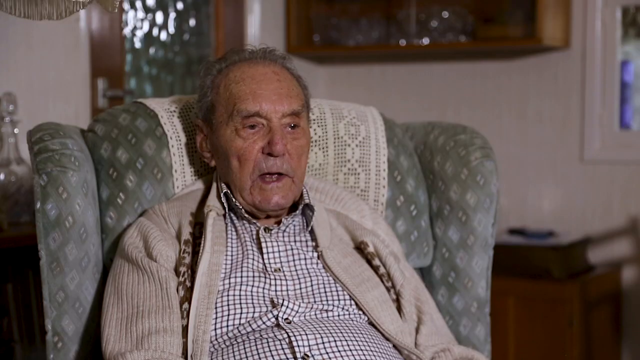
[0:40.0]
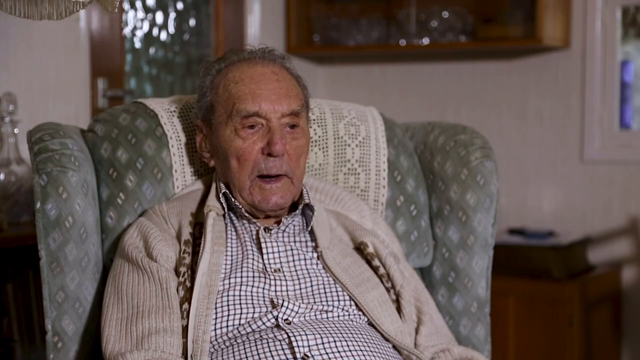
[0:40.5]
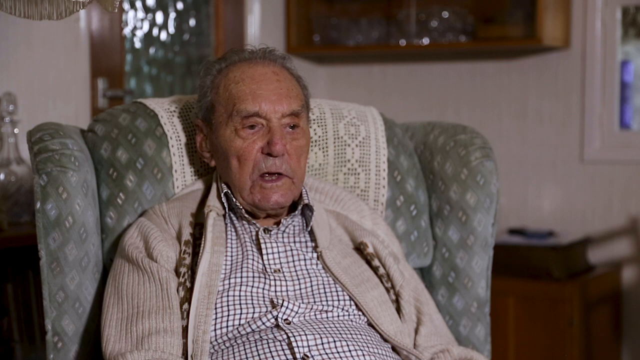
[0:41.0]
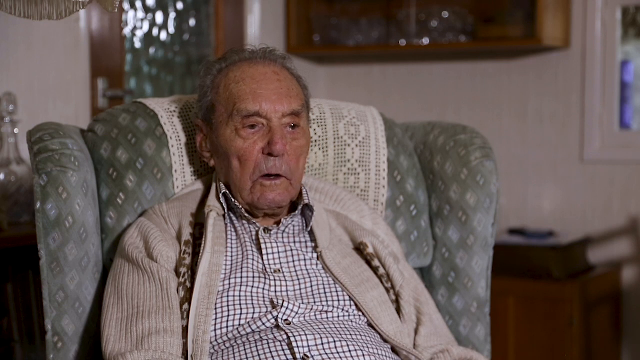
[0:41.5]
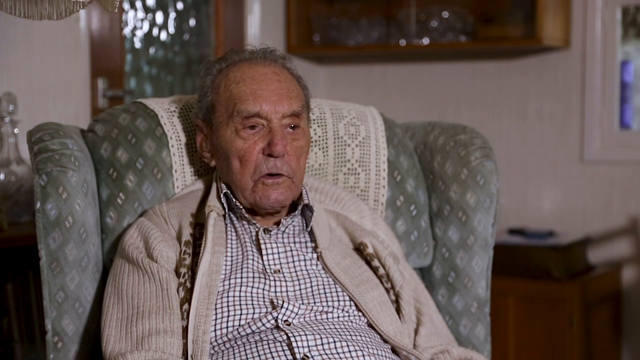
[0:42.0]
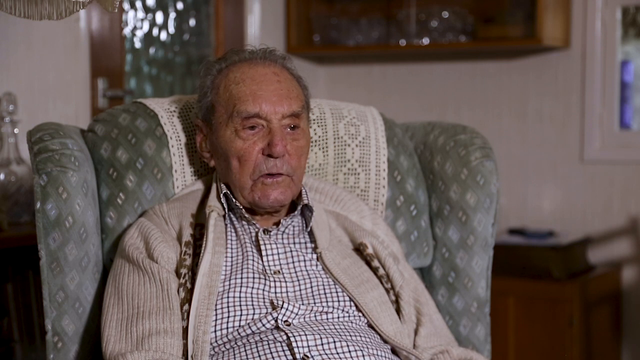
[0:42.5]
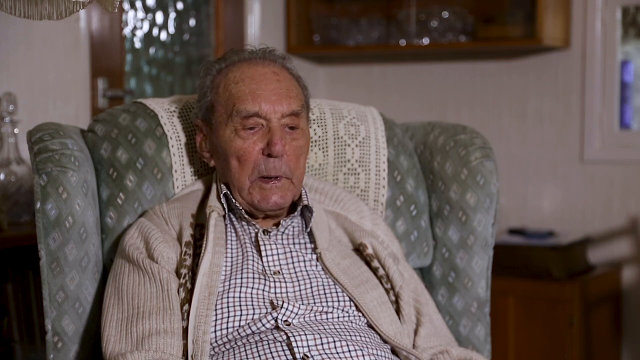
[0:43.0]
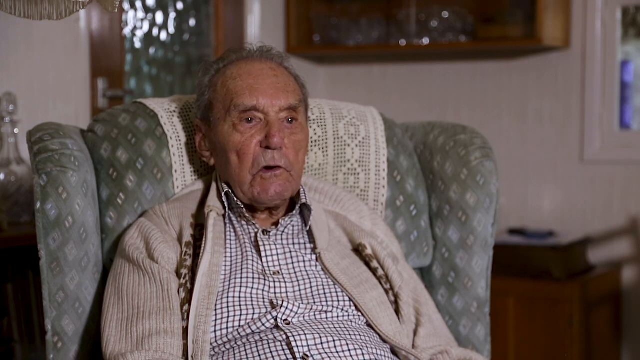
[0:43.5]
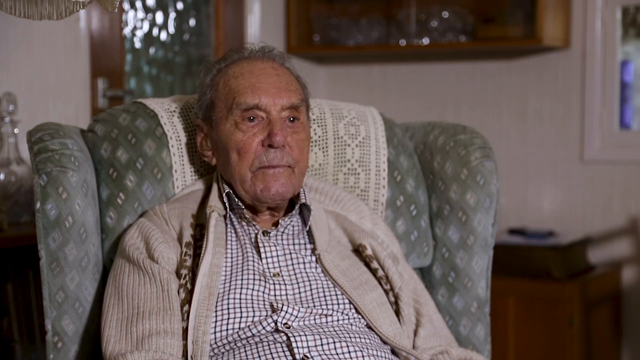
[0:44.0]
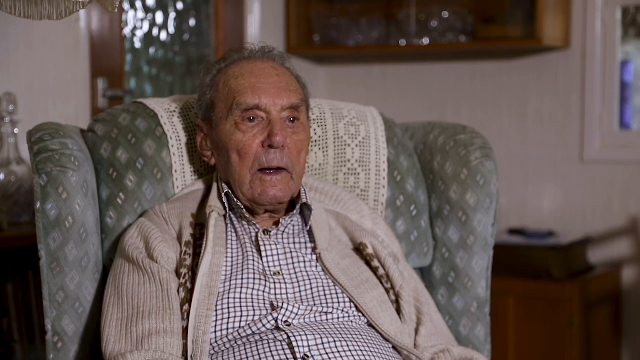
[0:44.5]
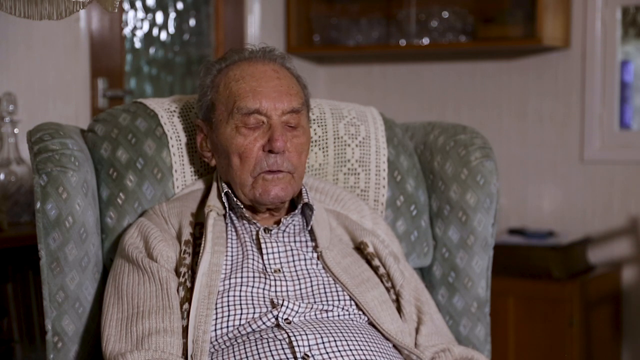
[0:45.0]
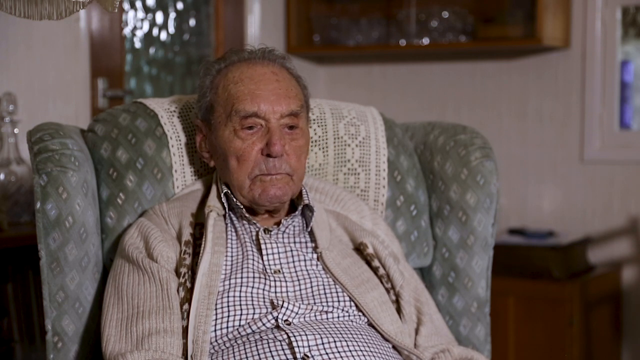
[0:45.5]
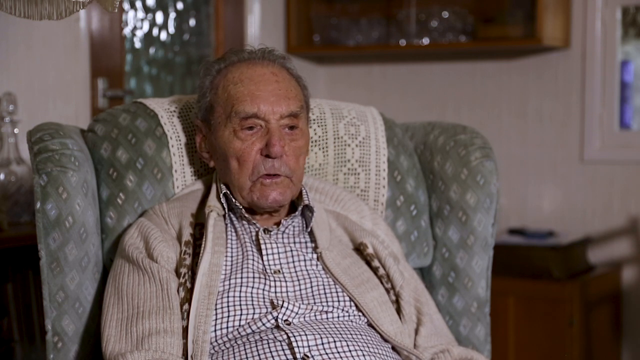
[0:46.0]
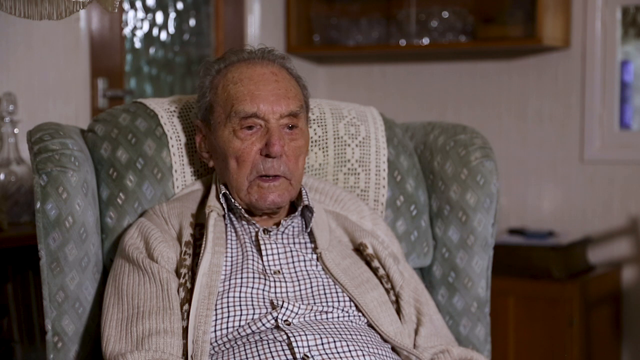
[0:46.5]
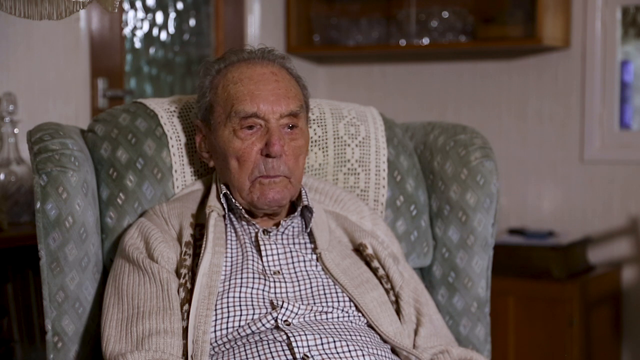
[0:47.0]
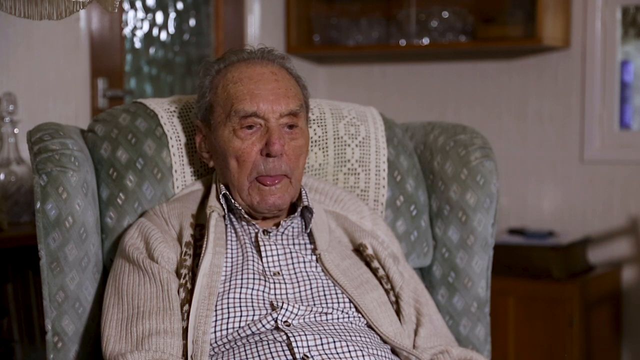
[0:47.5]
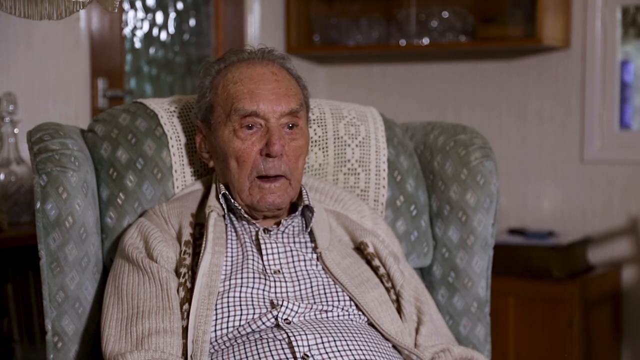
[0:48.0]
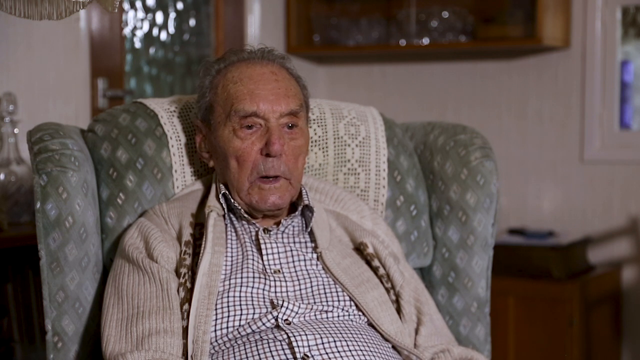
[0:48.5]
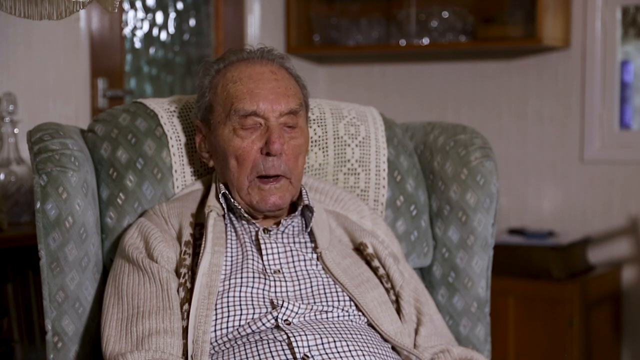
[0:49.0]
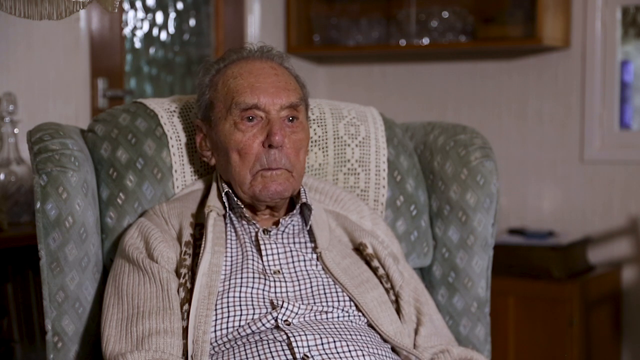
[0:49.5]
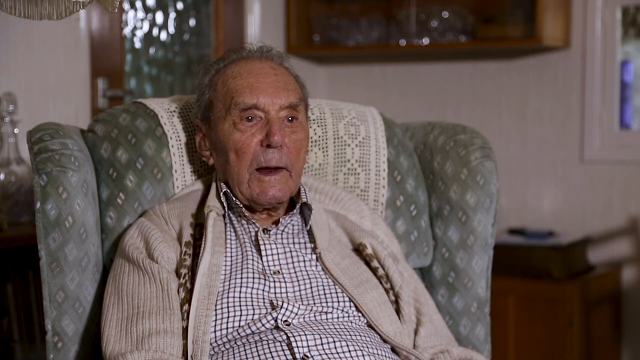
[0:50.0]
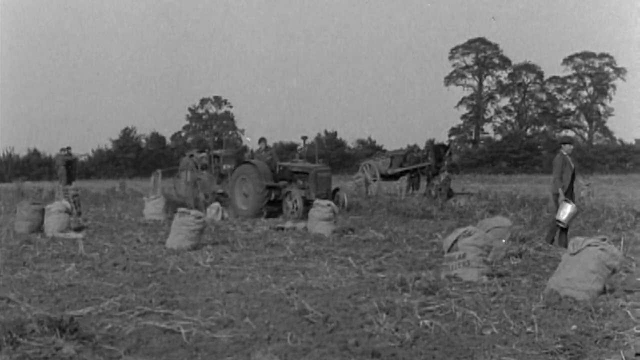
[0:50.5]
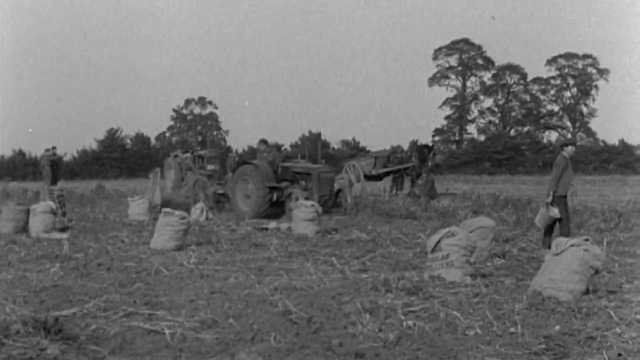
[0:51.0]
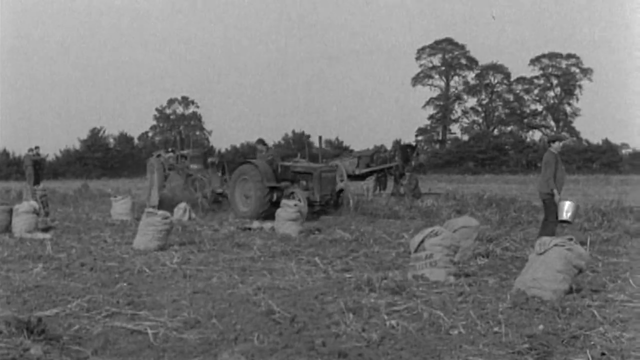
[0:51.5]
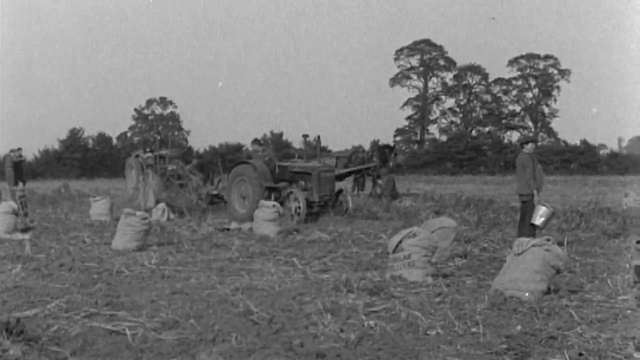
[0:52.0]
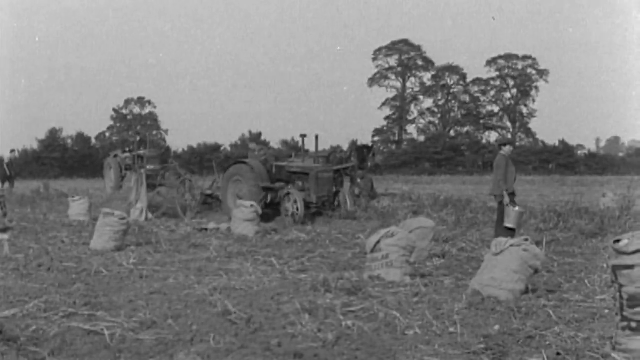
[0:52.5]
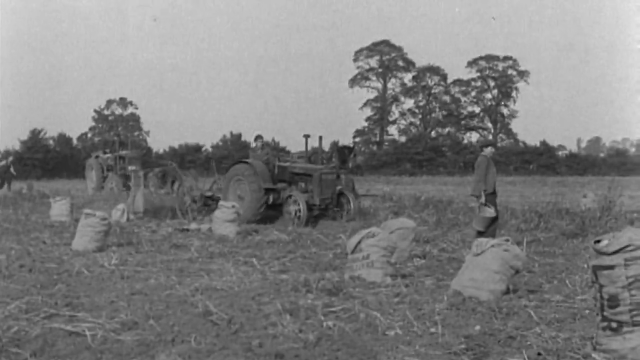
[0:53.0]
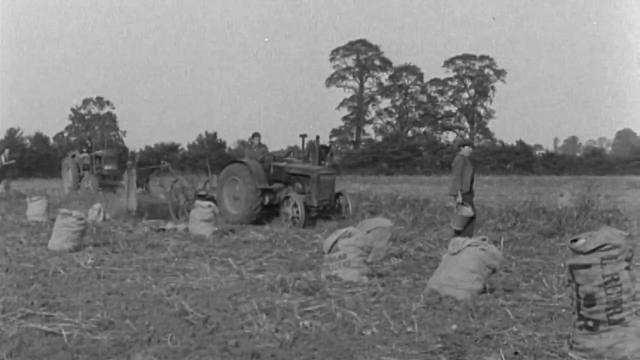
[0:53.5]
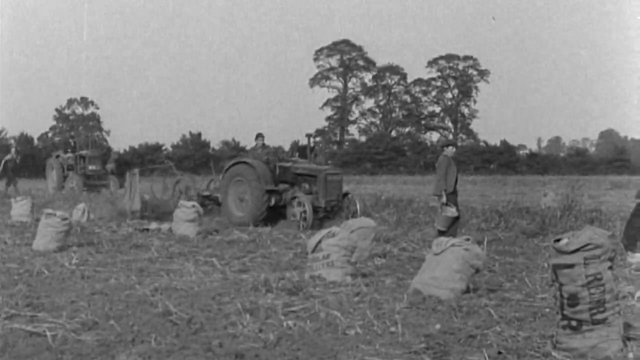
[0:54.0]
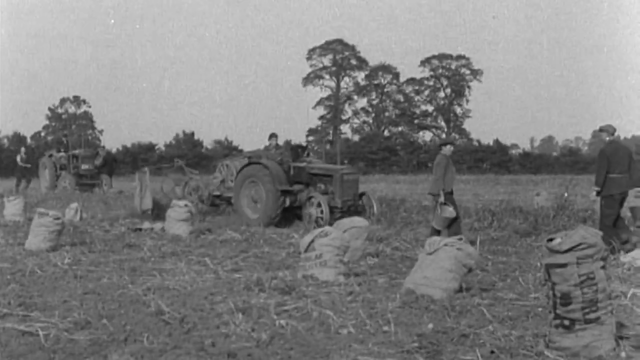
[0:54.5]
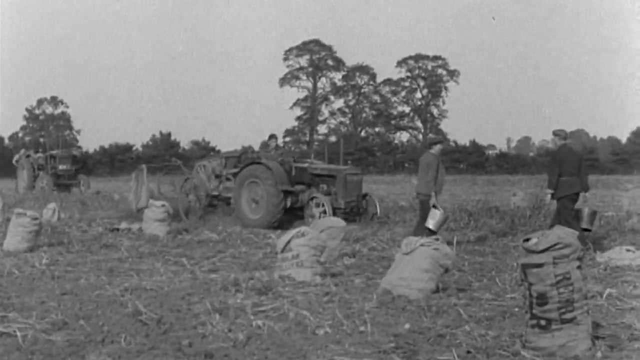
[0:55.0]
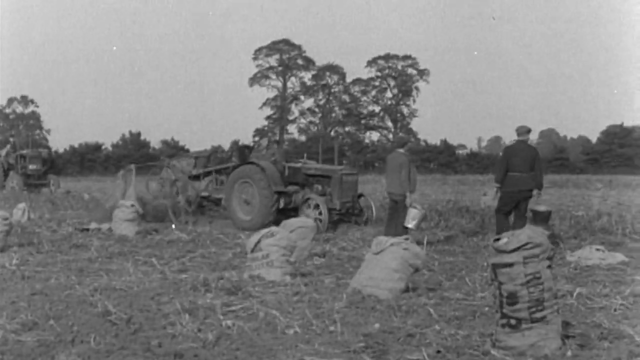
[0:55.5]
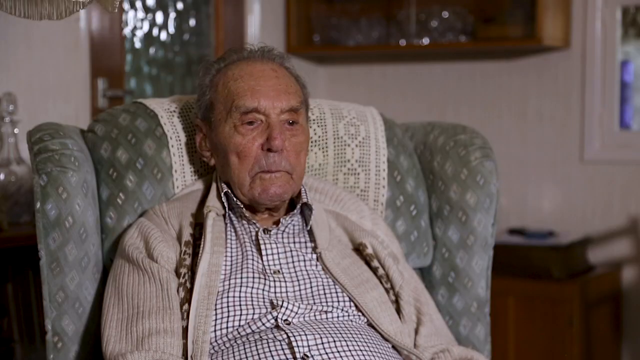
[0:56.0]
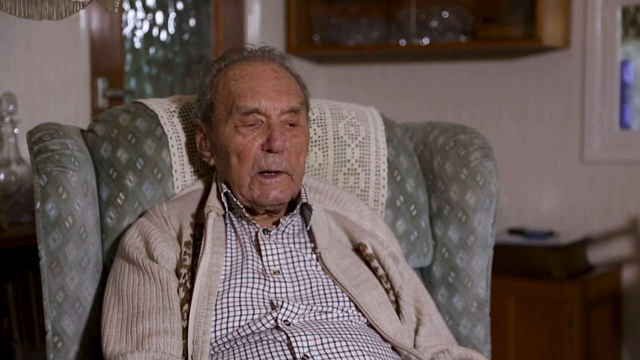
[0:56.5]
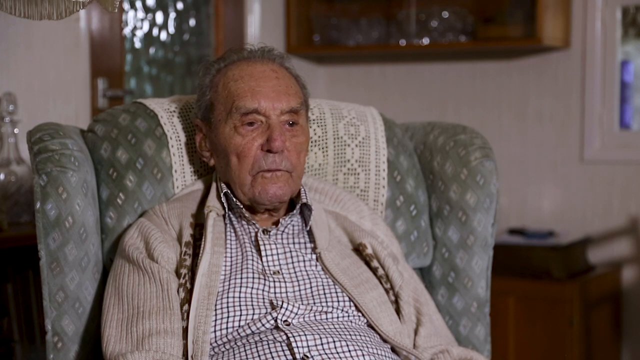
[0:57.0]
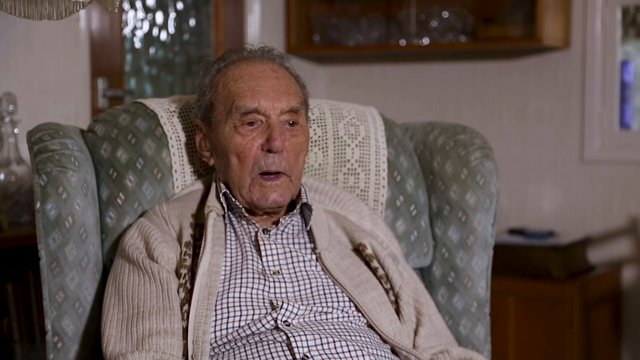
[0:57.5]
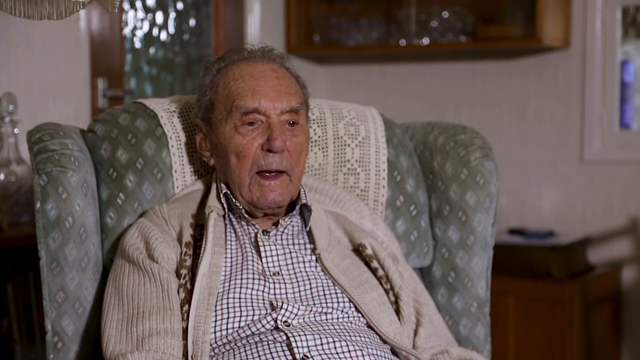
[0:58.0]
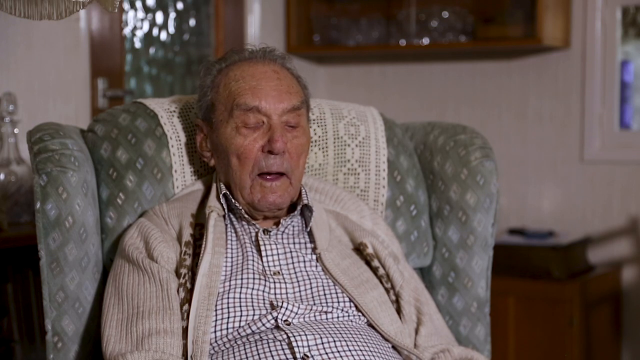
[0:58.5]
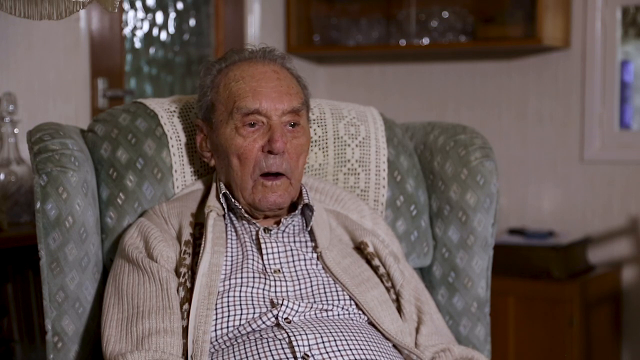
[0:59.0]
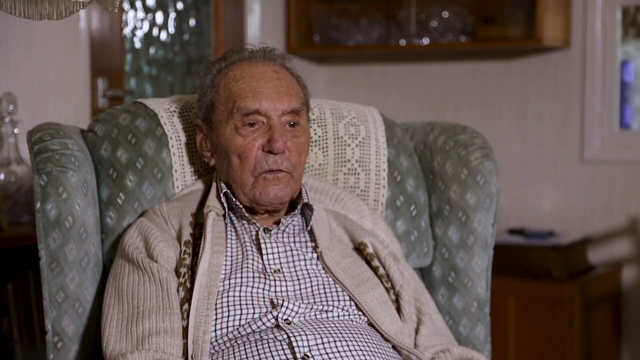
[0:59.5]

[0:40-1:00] An elderly Caucasian man is seated in a gray armchair with designs on it, wearing a check shirt under a tan sweater with brown decorations on each side of the lapel. He speaks, looks up at the camera every now and then, and looks like he has very sad eyes. The view switches to black-and-white footage of farmland, with trees in the background, some short and others taller, particularly at the top right. Bags full of something are in a field. An old tractor is in the center, another tractor is left of center, and a man holds a bucket. The tractors move and two men are in the scene. The video then returns to the elderly man in the armchair.